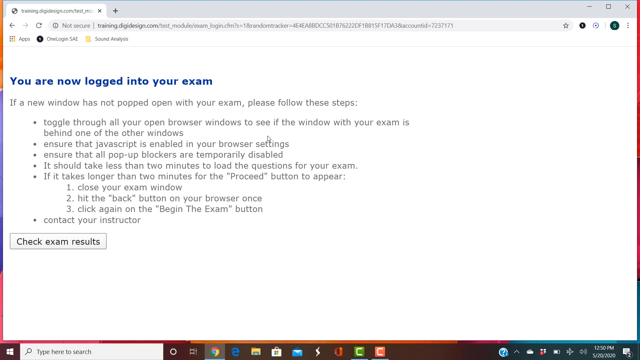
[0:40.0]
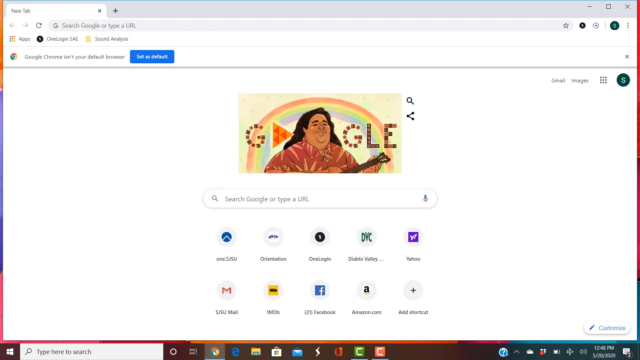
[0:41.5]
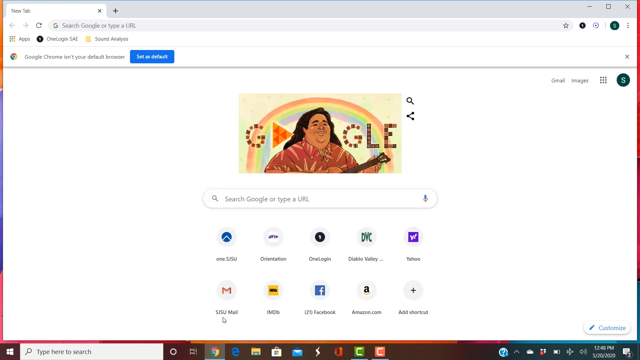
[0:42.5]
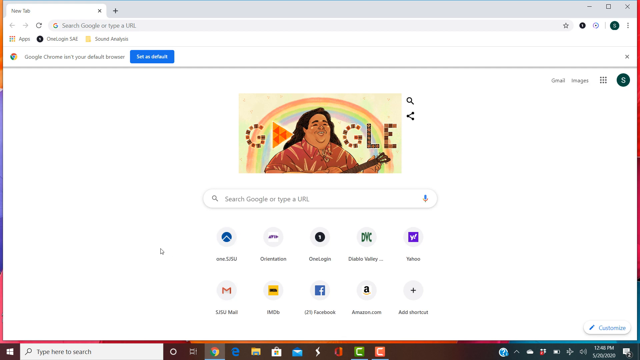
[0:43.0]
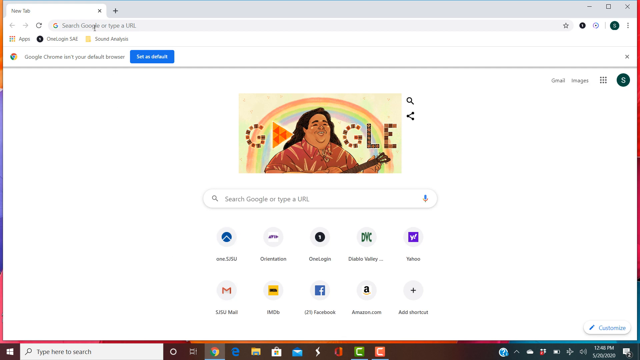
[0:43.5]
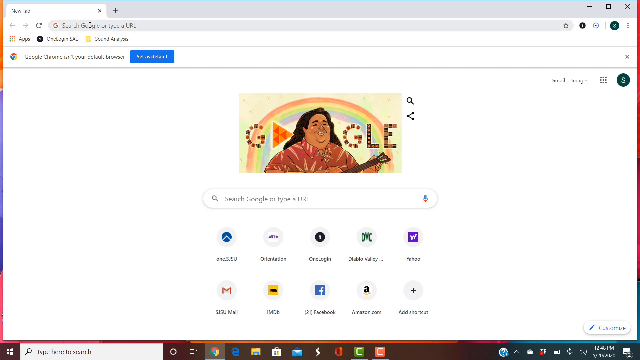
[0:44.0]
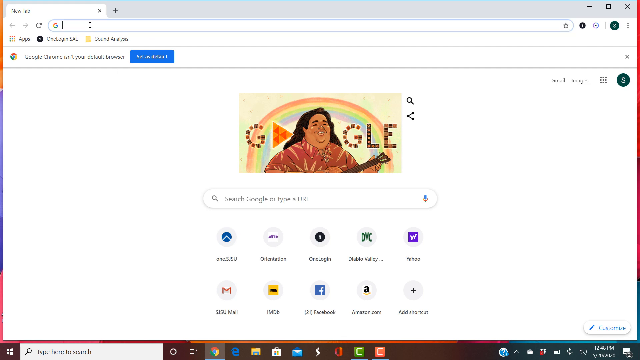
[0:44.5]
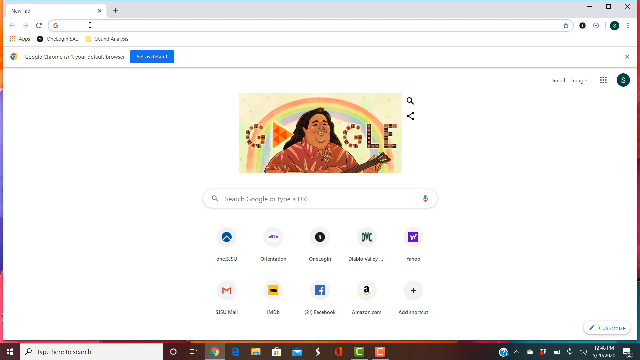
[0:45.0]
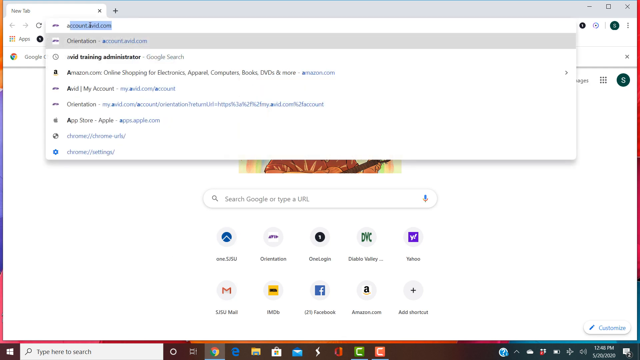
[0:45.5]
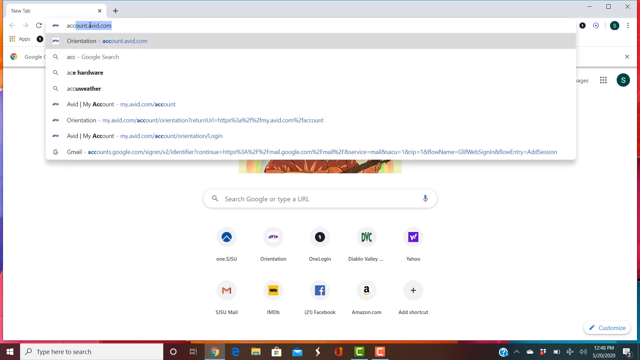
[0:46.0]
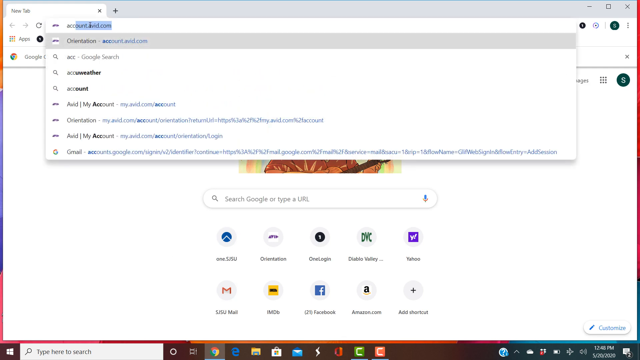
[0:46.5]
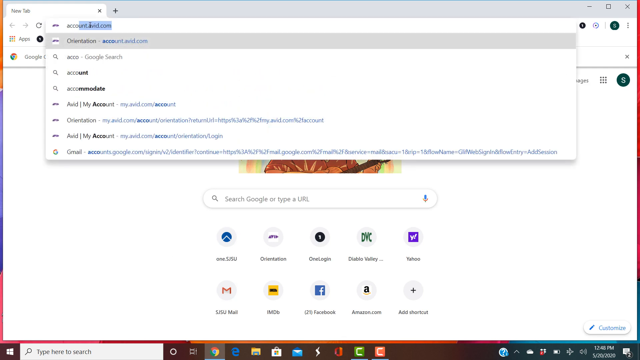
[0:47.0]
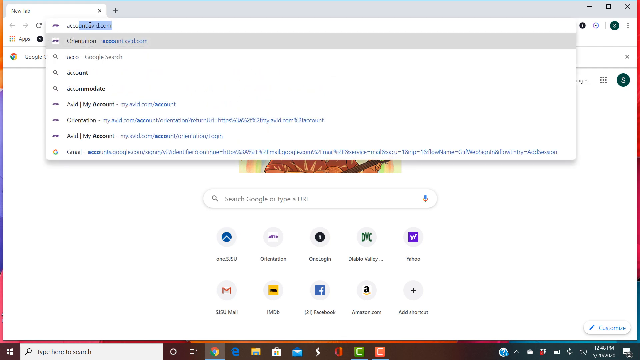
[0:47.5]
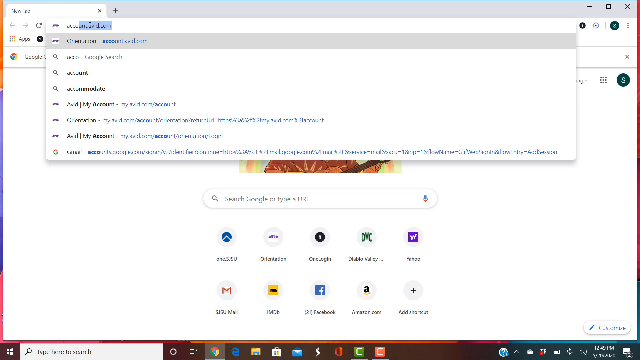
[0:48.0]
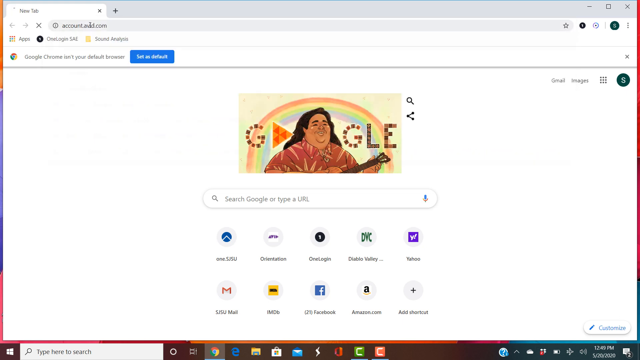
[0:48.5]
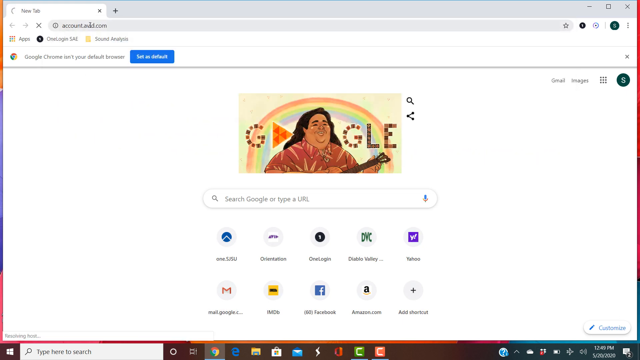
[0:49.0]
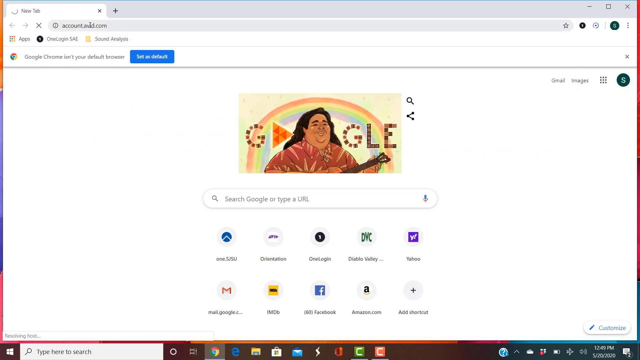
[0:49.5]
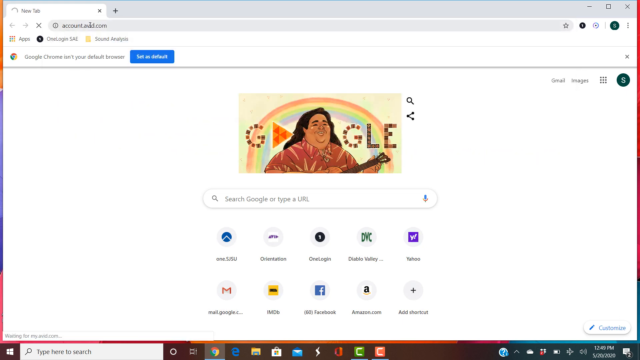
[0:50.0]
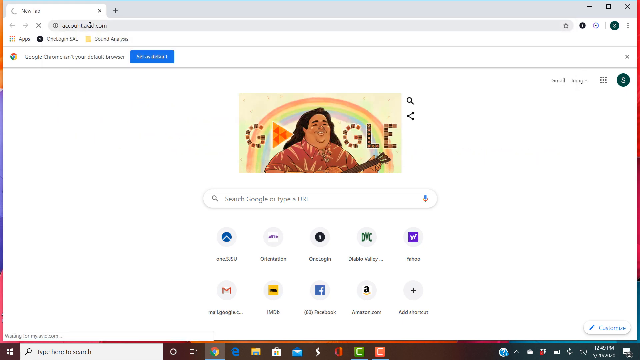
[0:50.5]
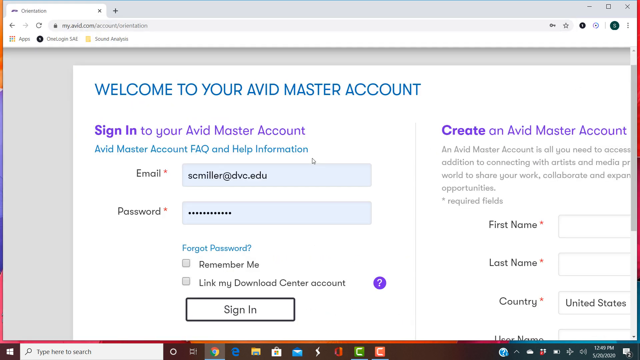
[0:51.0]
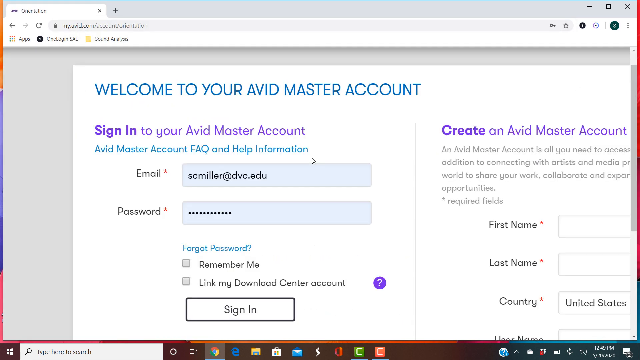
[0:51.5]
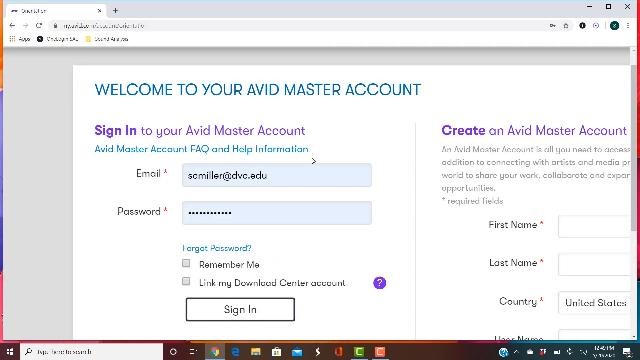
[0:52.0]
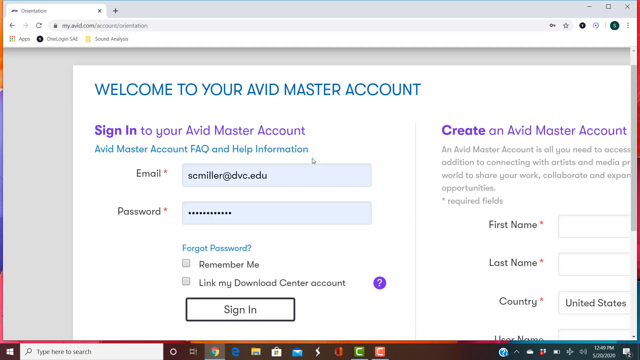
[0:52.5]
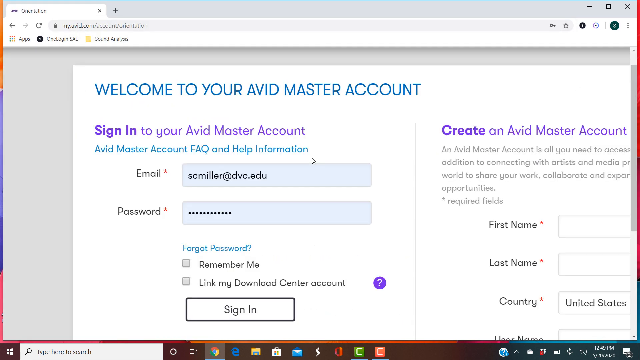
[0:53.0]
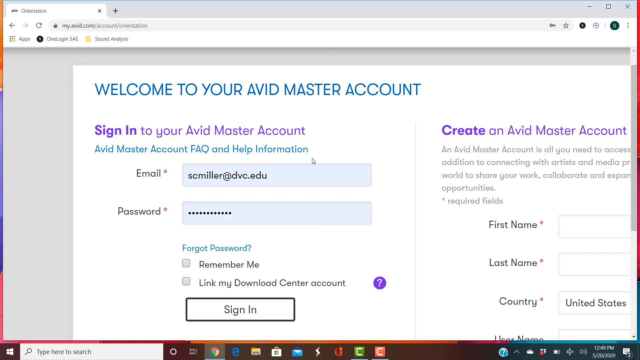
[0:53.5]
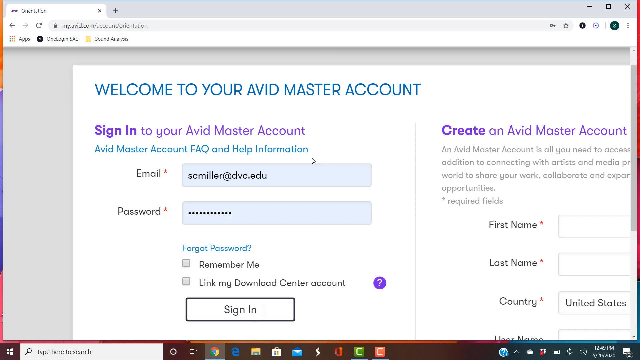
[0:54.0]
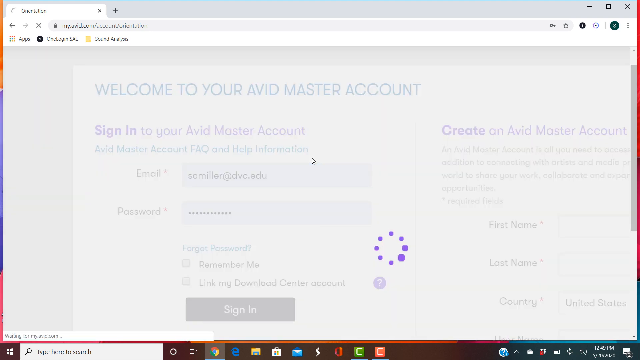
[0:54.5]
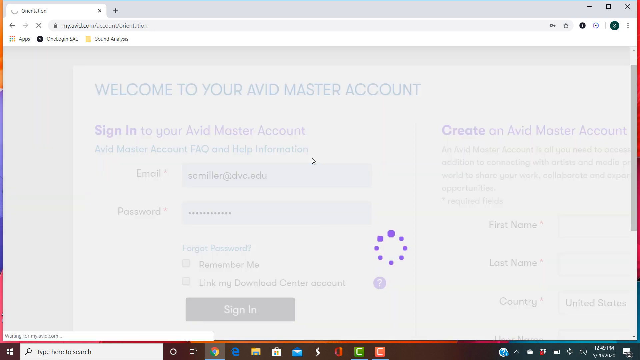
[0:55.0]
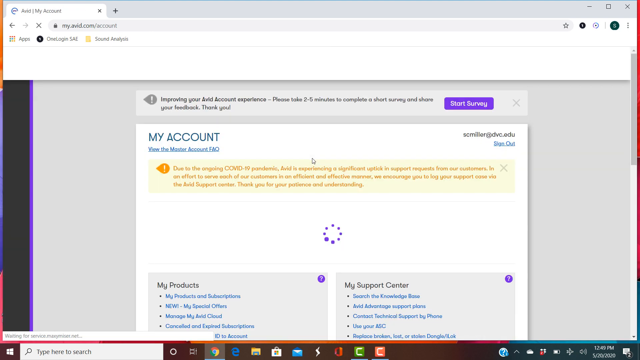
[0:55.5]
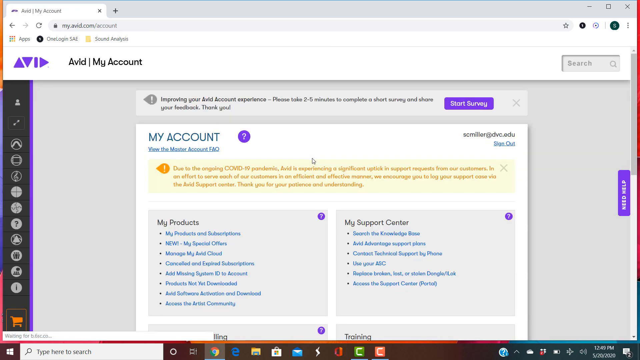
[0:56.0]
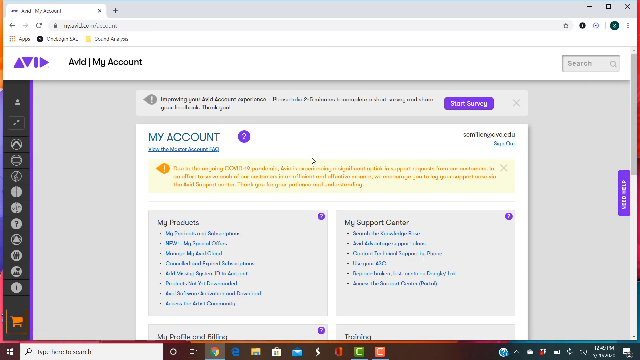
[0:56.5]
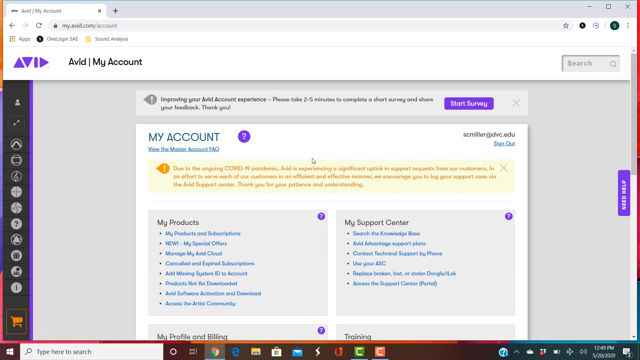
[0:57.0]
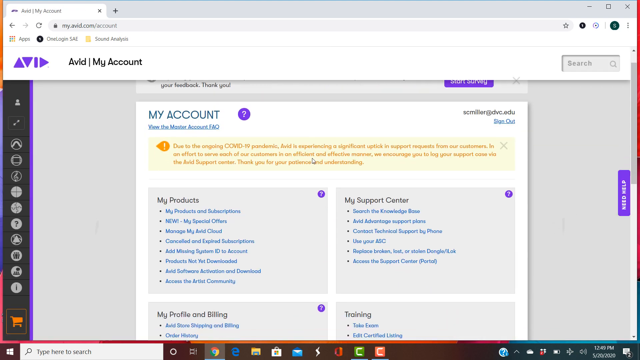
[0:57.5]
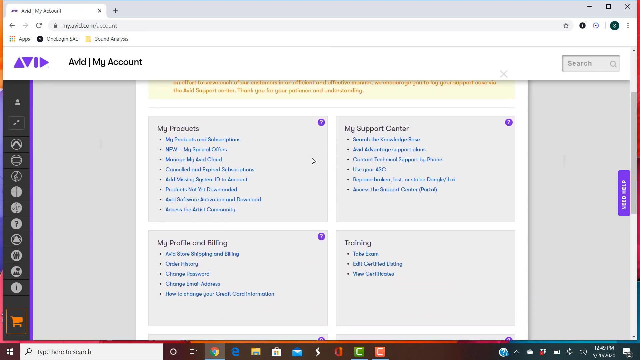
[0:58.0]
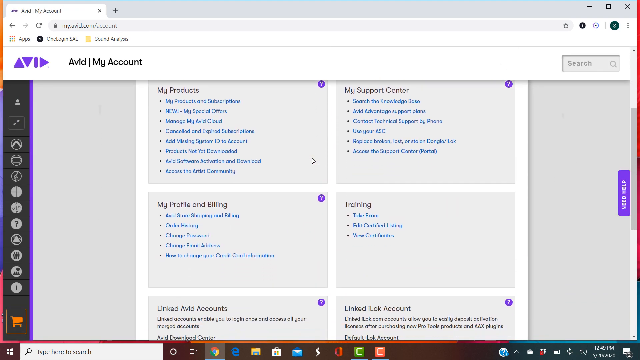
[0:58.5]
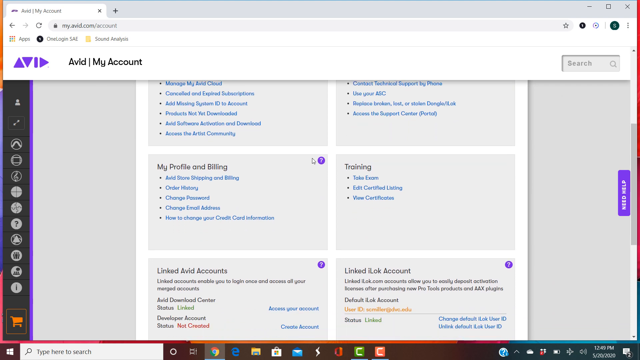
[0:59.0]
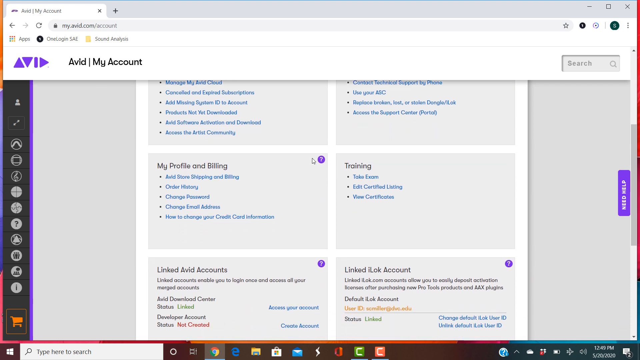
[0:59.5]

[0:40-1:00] The Windows computer opens a tab in Chrome, and the website reads "welcome to your master account" and "Sign in to the Avid Master Account". An email is entered and the password field shows a row of dots. There is a link for a forgotten password, a "remember me" box to tick, and another box for "link my download center account". The web page is split in two; on the other side is an option to create an Avid Master Account, with fields for first name and last name. The user seems to click on login, and an account opens showing training, profile and other contents.